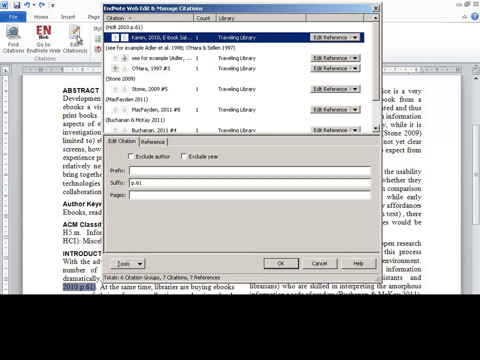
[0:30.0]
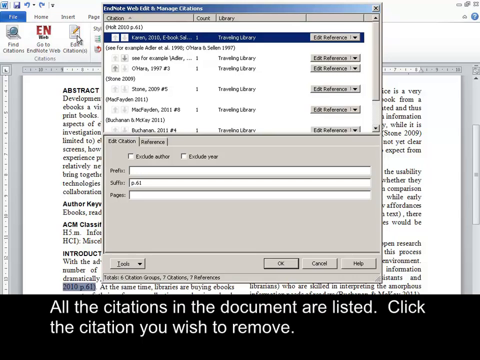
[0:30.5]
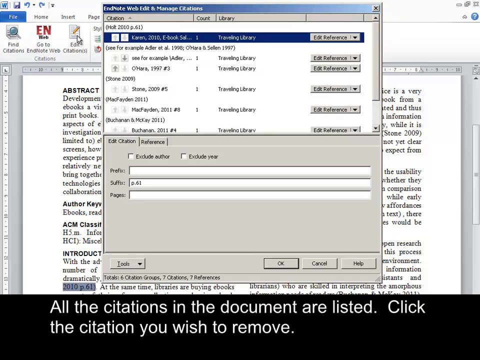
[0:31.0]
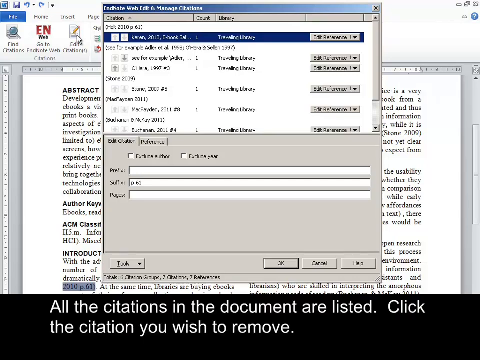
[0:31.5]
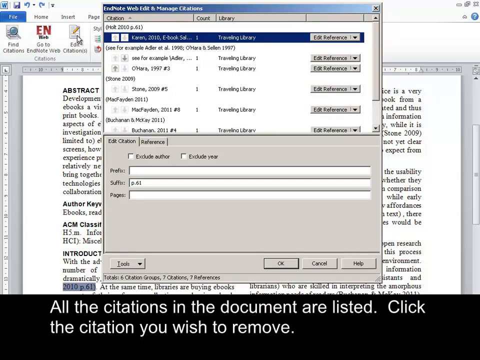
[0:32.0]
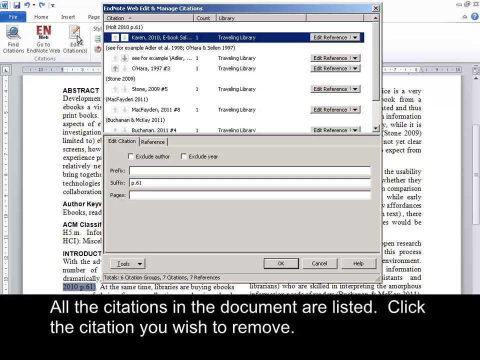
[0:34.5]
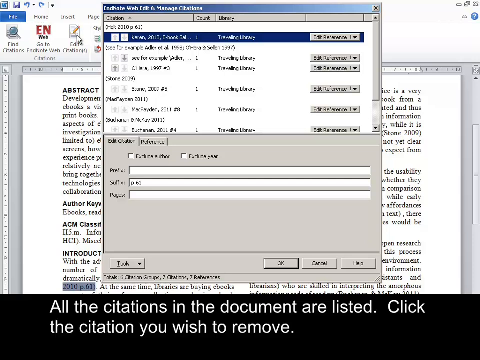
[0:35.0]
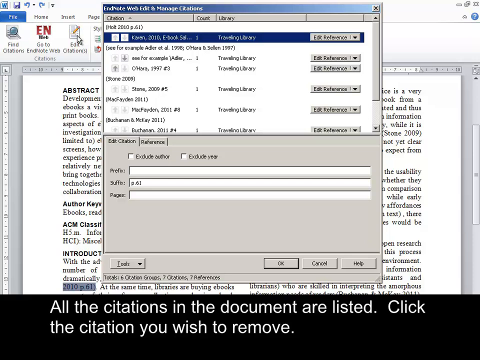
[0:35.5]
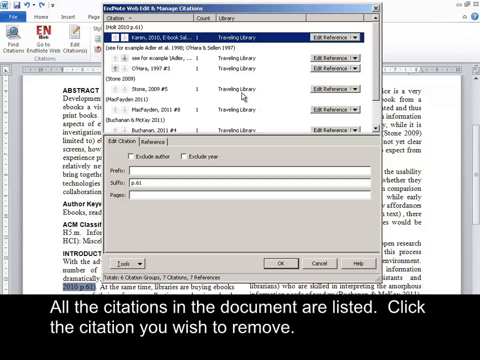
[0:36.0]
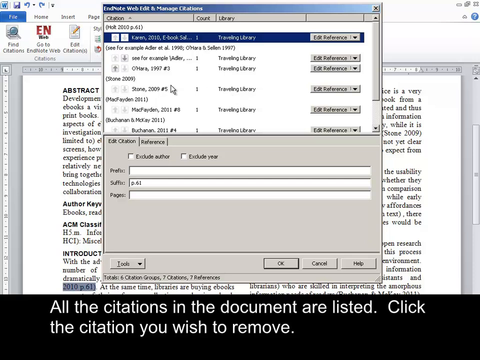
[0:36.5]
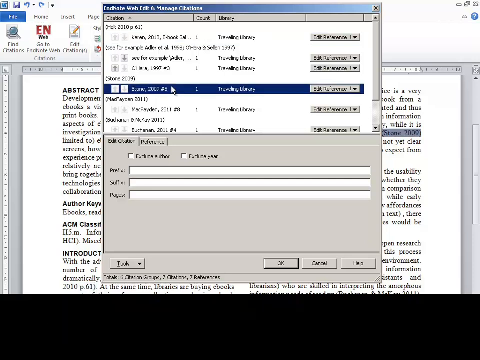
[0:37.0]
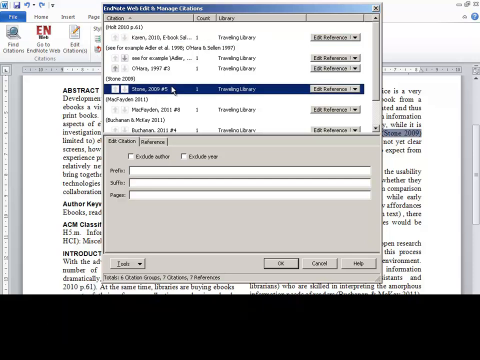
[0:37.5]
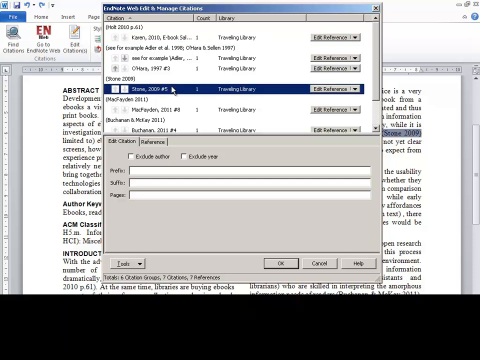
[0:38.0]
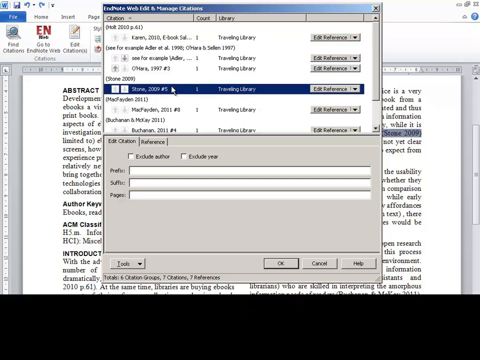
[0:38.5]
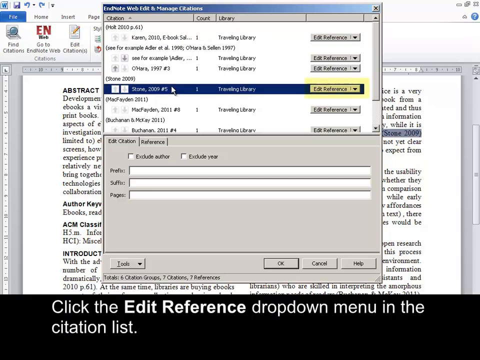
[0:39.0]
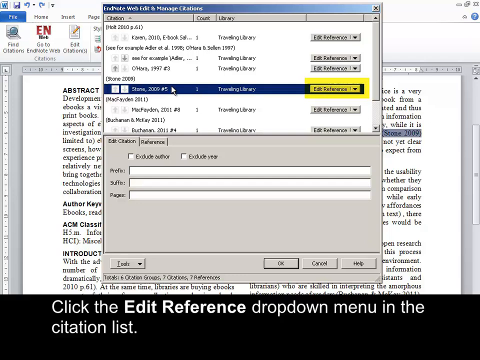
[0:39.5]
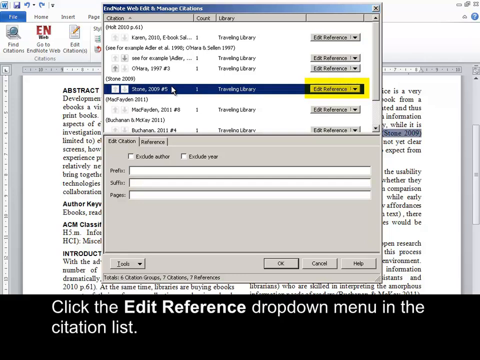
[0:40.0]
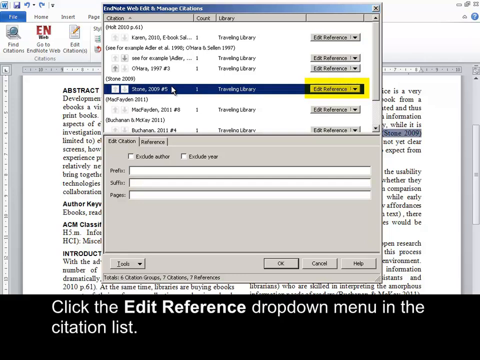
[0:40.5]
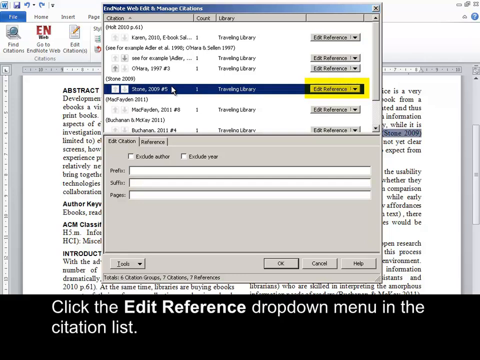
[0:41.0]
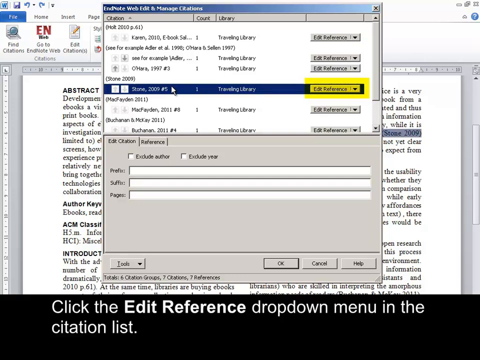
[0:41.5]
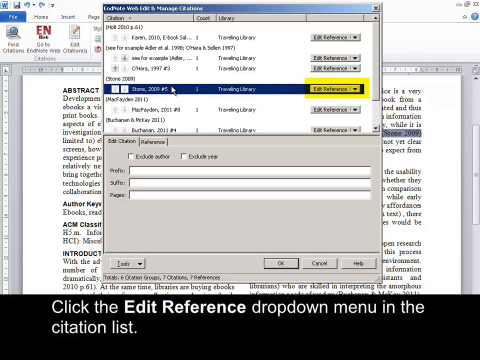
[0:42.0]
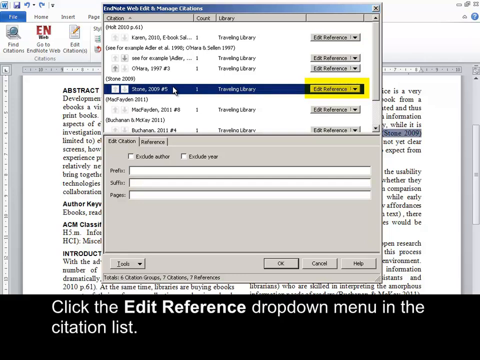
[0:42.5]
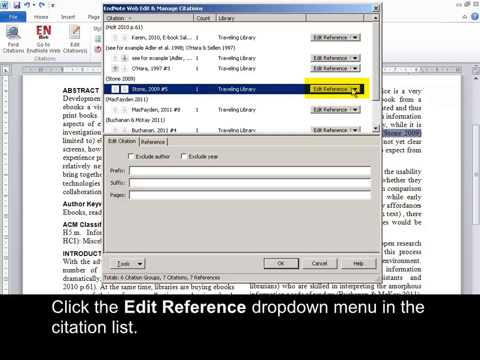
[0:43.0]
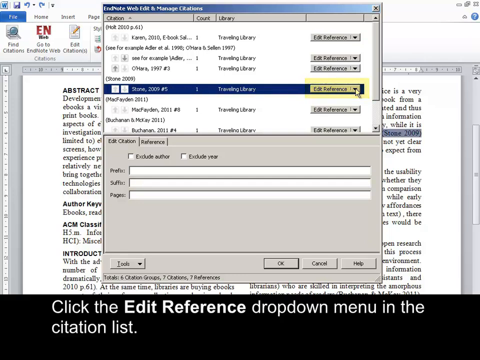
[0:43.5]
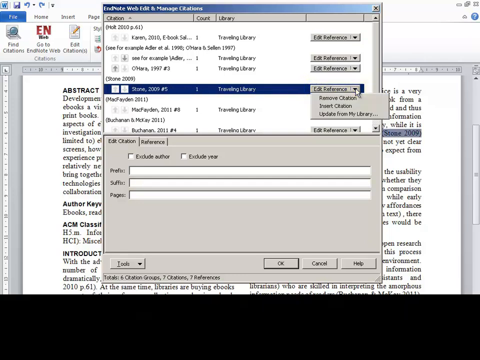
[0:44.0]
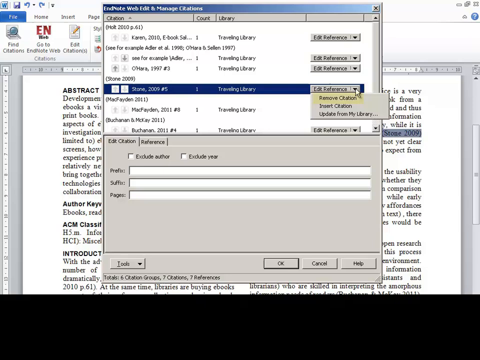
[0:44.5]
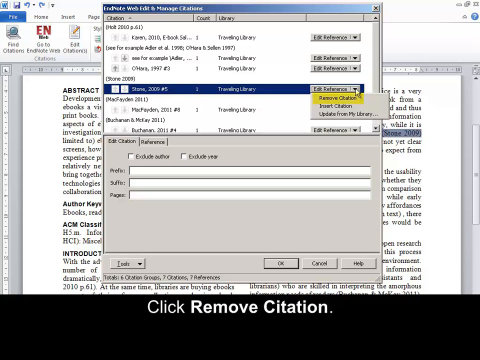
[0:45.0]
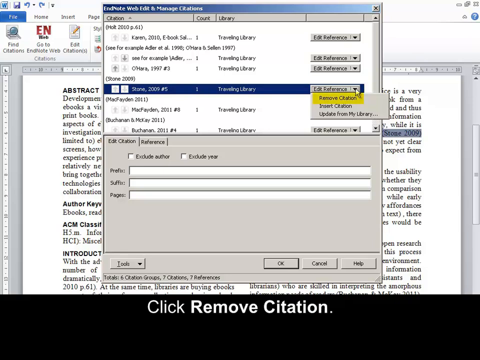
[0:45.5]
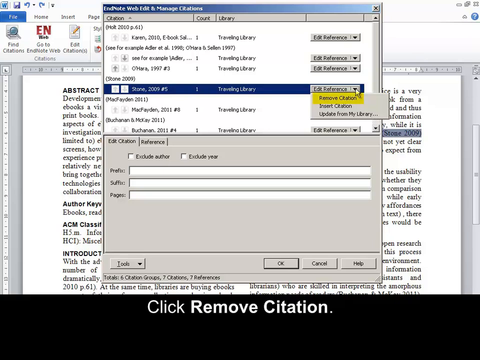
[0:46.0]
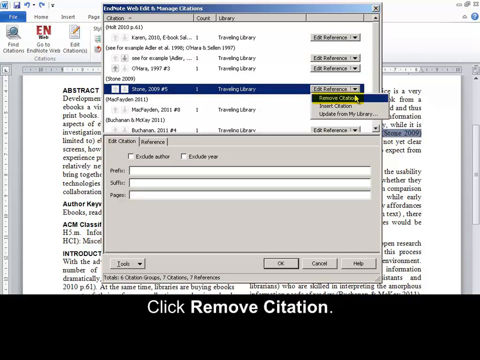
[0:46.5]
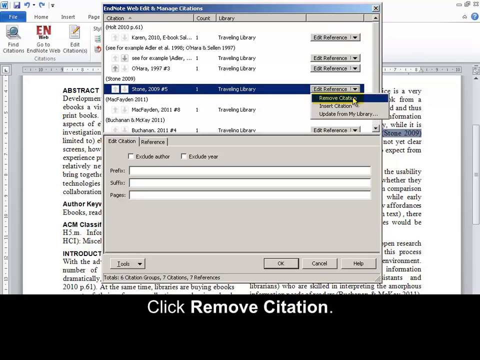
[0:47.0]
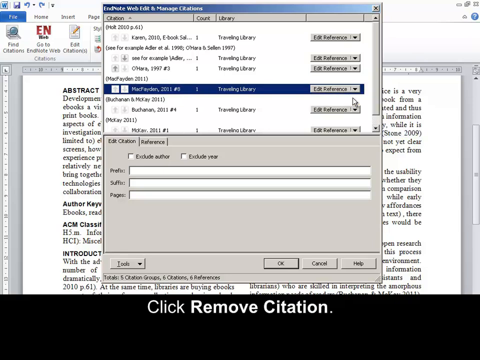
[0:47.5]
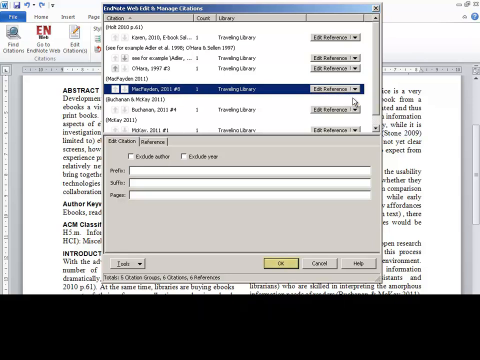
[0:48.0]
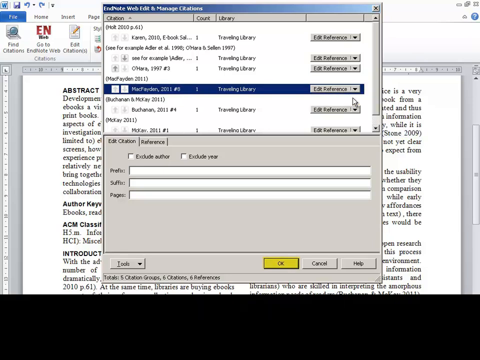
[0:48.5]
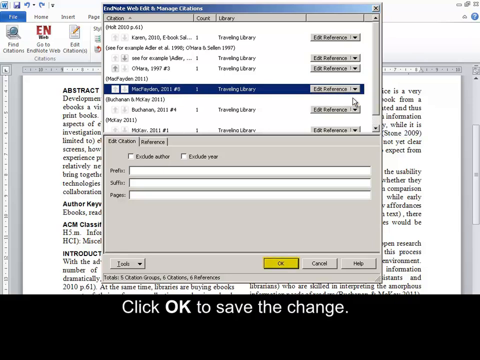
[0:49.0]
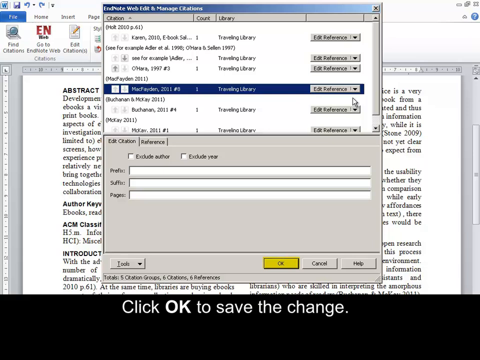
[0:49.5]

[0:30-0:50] The window lists the references already included in the article. The reference of interest, "Stone 2019", is selected, and "Edit Reference" is clicked. Three options appear: "Remove Citation", "Insert Citation" and "Update from My Library". The first option, "Remove Citation", is chosen, and OK is clicked below, so that the reference is removed from the document.